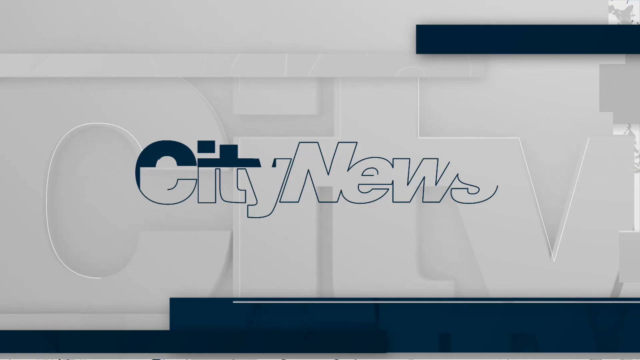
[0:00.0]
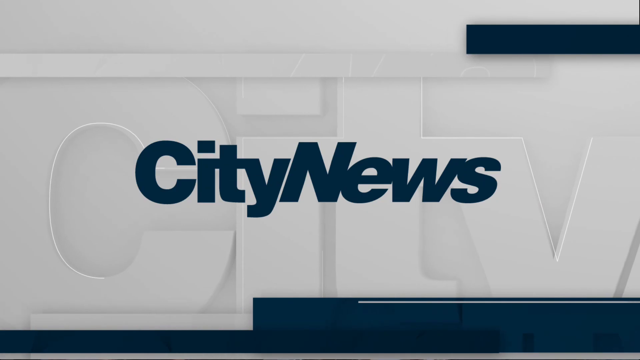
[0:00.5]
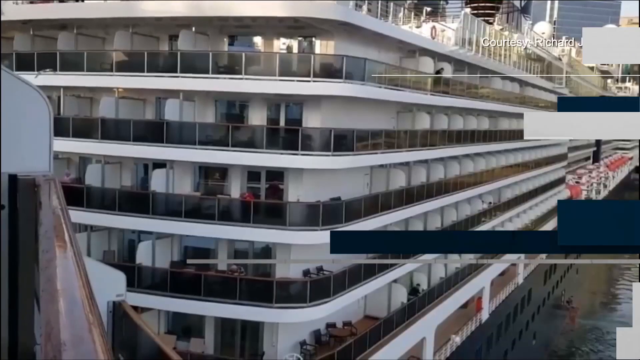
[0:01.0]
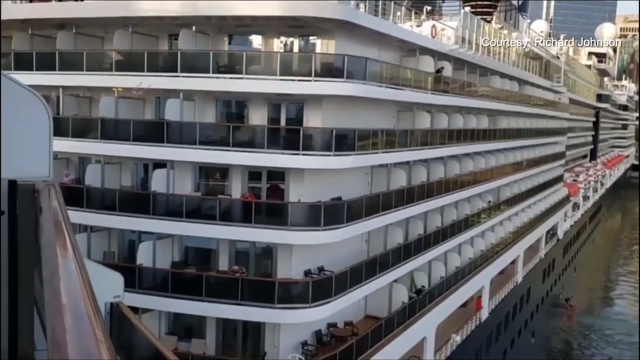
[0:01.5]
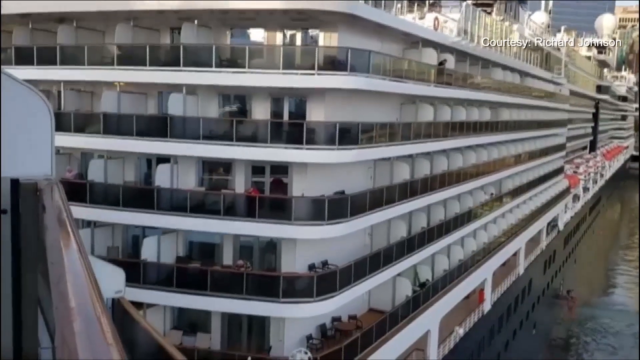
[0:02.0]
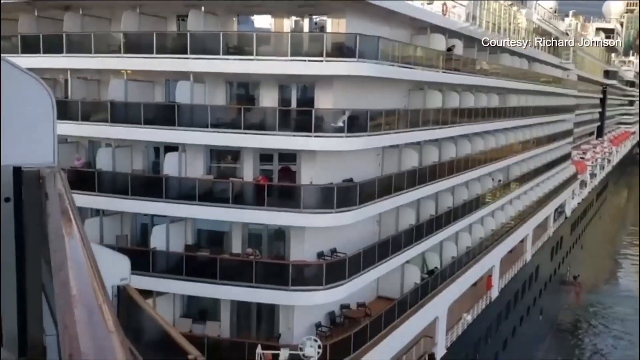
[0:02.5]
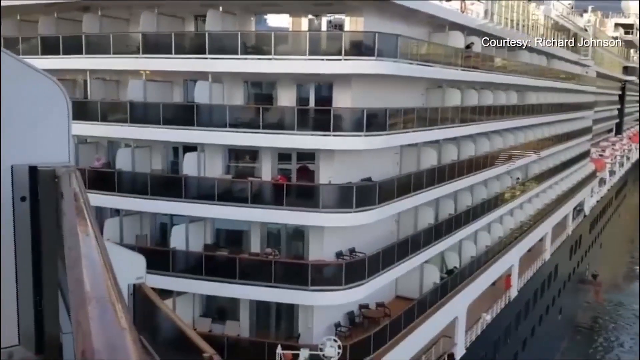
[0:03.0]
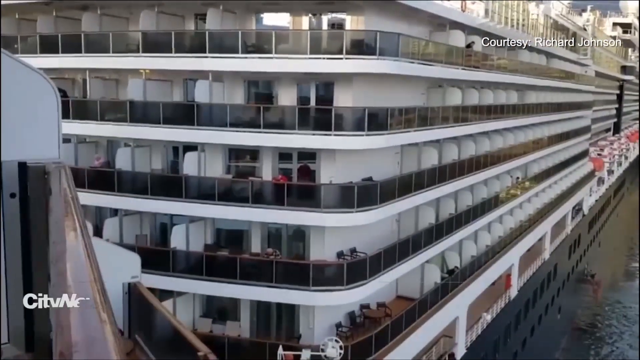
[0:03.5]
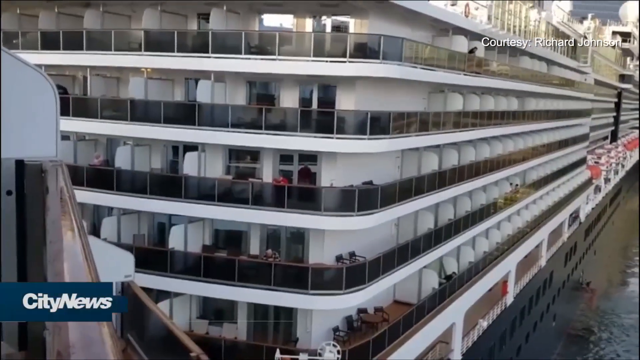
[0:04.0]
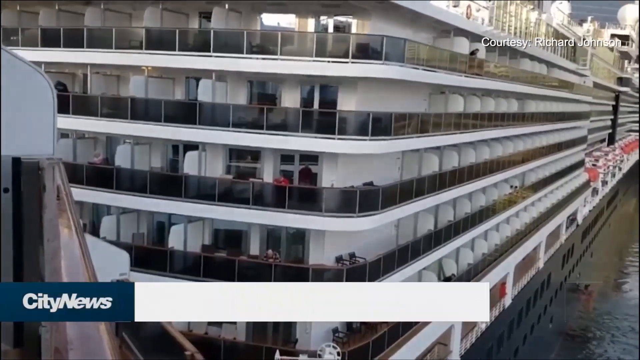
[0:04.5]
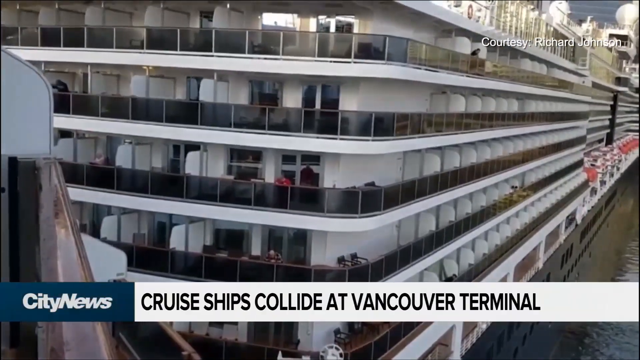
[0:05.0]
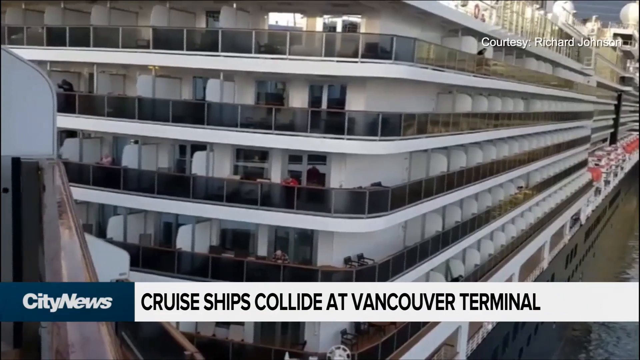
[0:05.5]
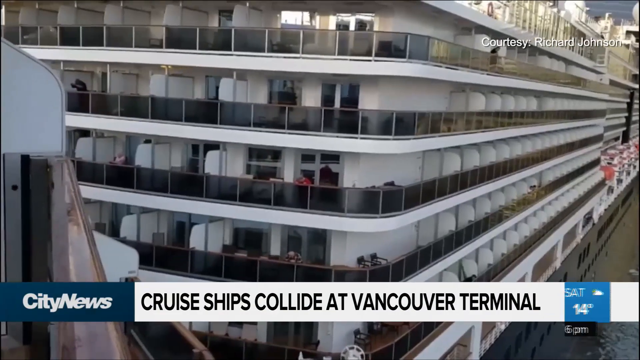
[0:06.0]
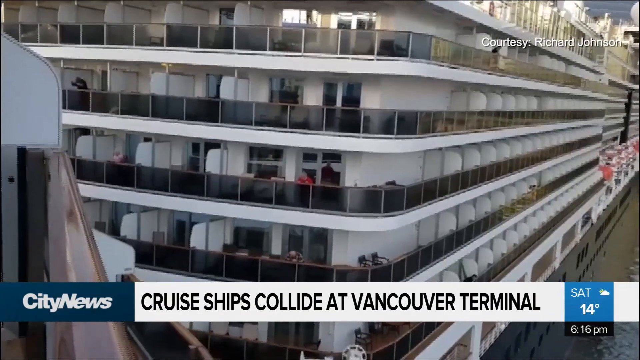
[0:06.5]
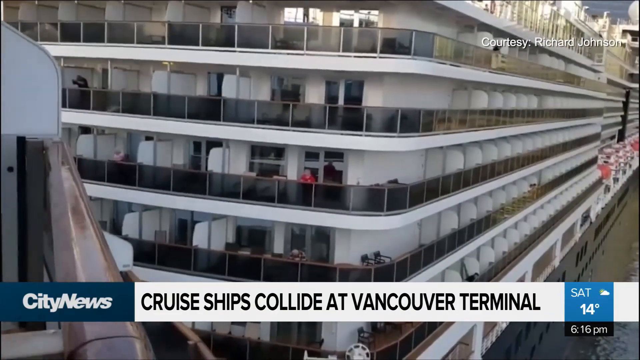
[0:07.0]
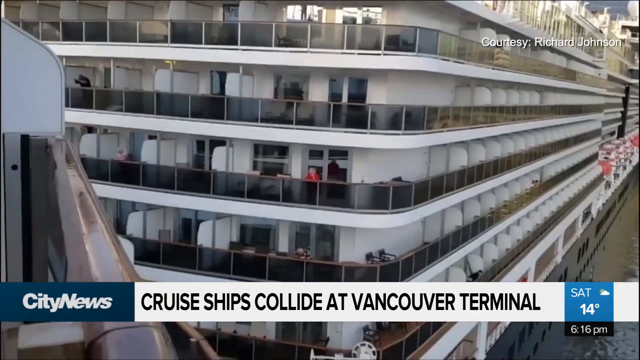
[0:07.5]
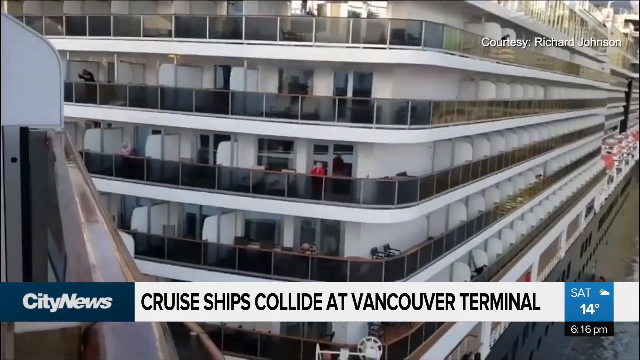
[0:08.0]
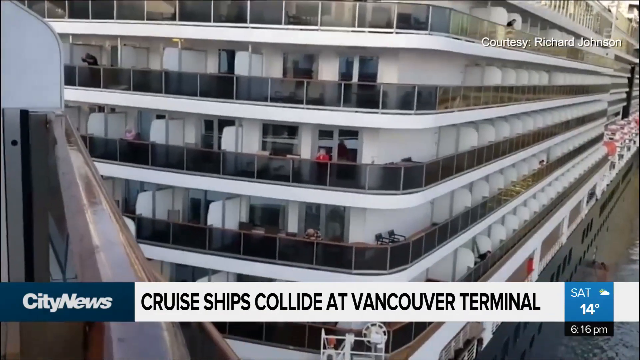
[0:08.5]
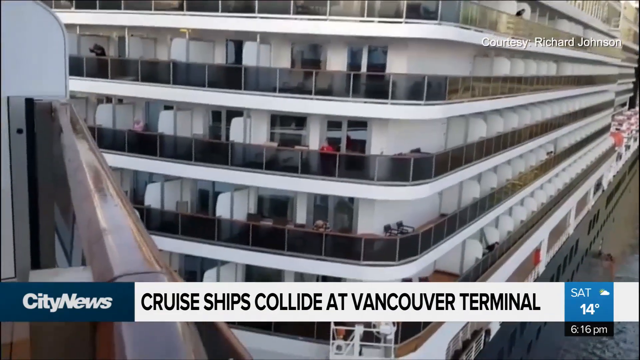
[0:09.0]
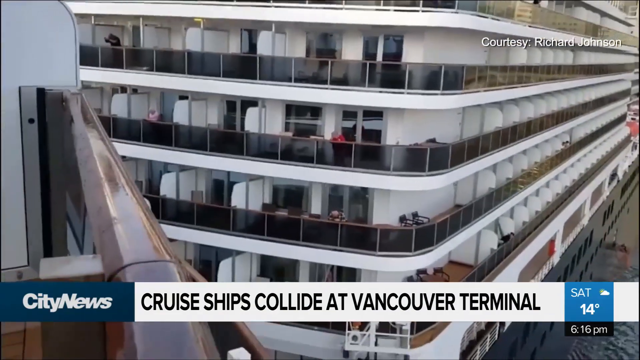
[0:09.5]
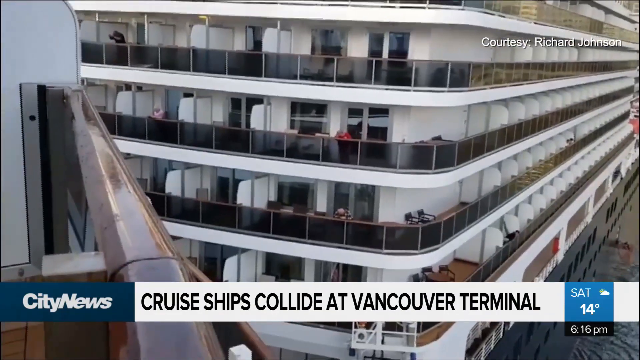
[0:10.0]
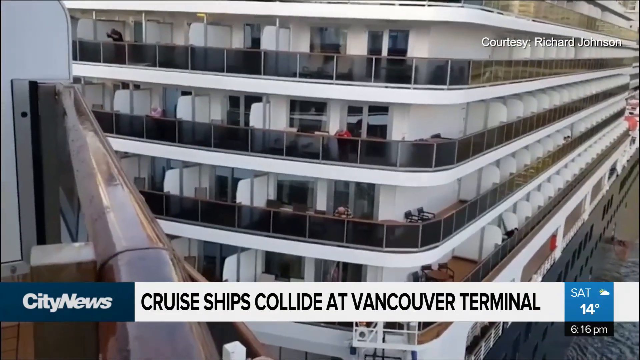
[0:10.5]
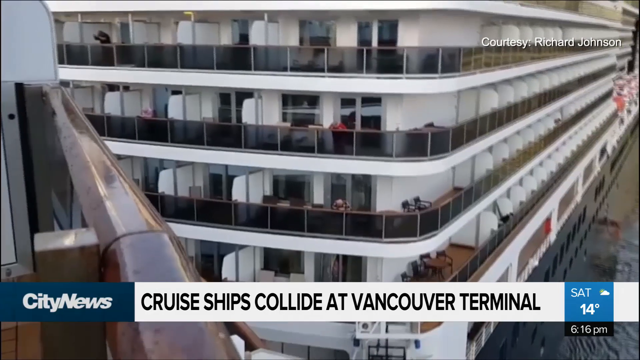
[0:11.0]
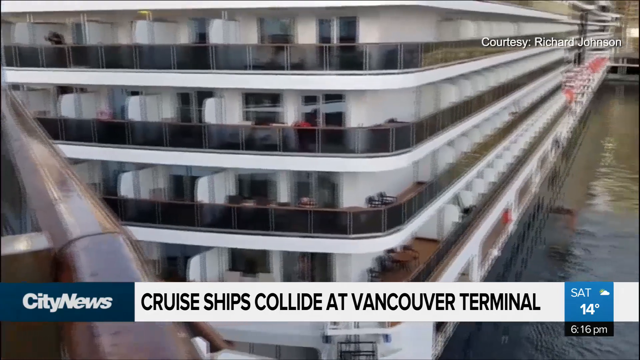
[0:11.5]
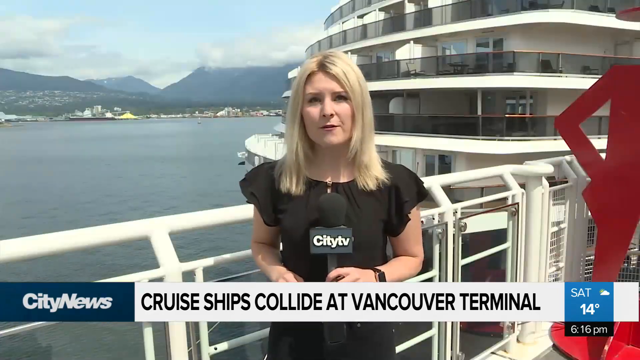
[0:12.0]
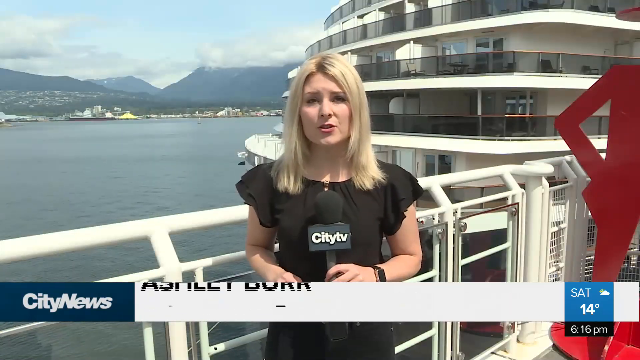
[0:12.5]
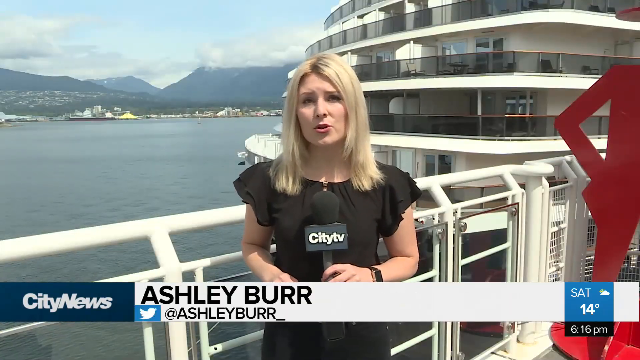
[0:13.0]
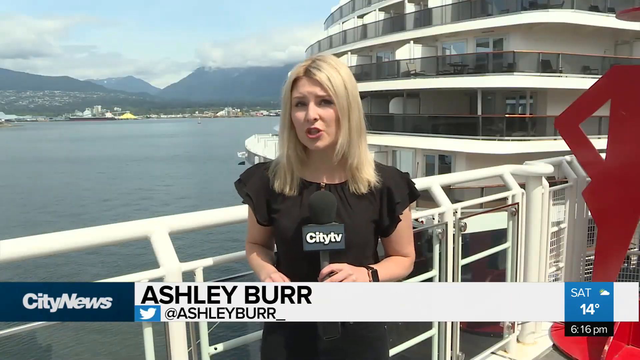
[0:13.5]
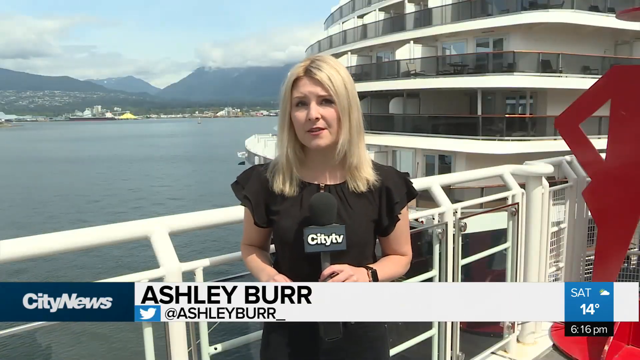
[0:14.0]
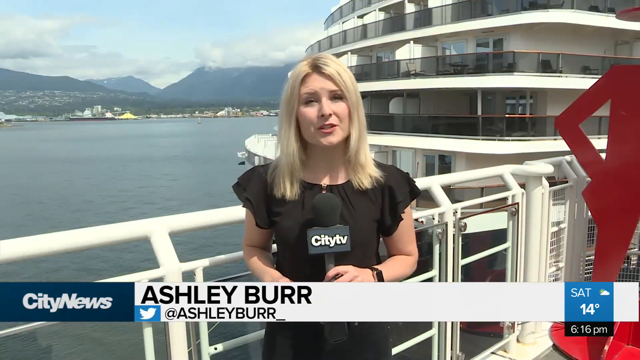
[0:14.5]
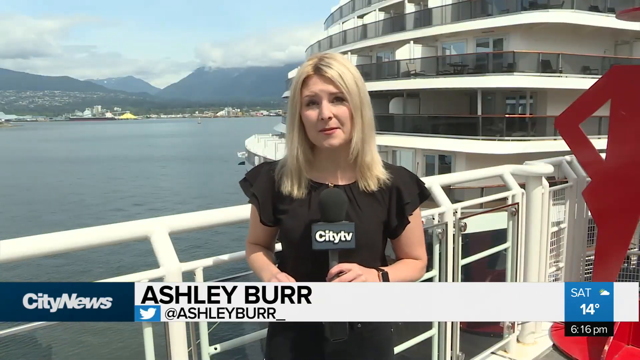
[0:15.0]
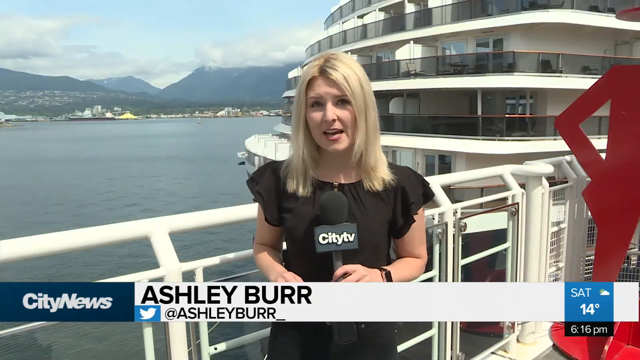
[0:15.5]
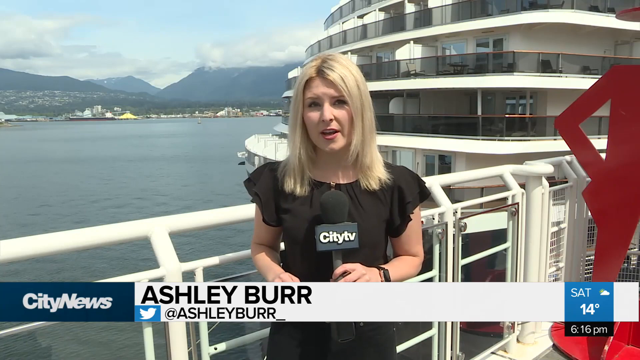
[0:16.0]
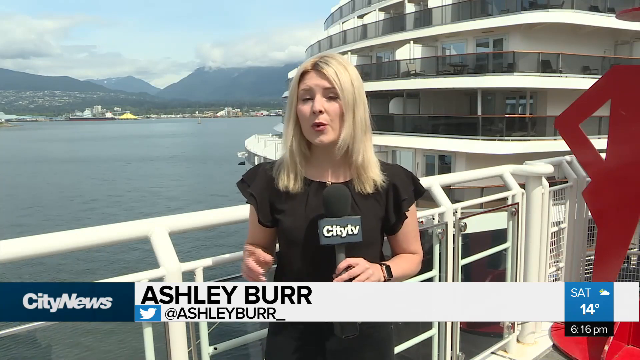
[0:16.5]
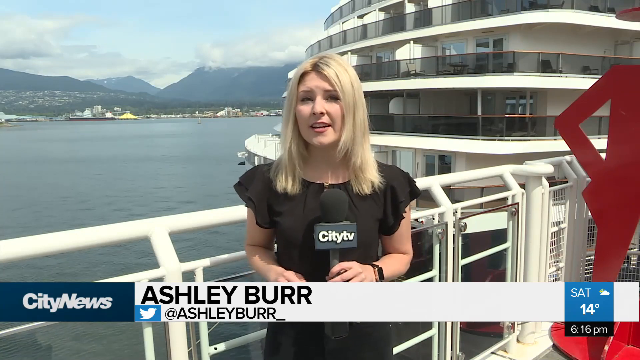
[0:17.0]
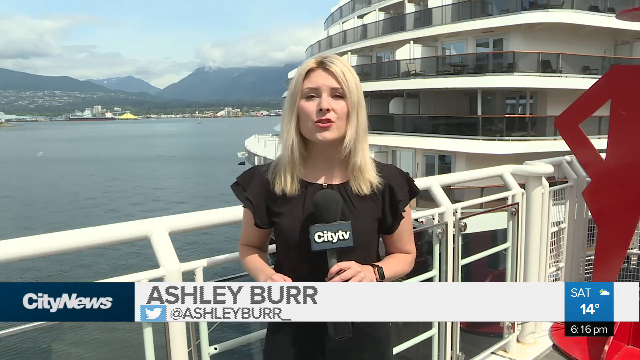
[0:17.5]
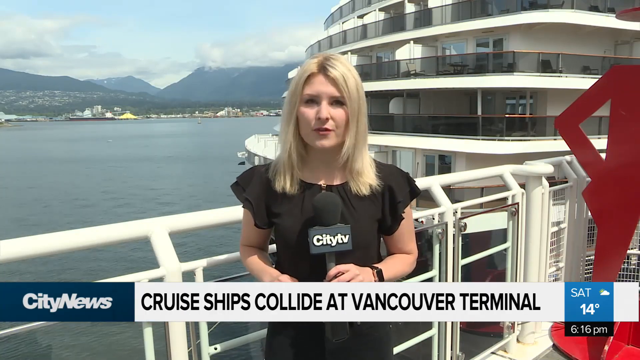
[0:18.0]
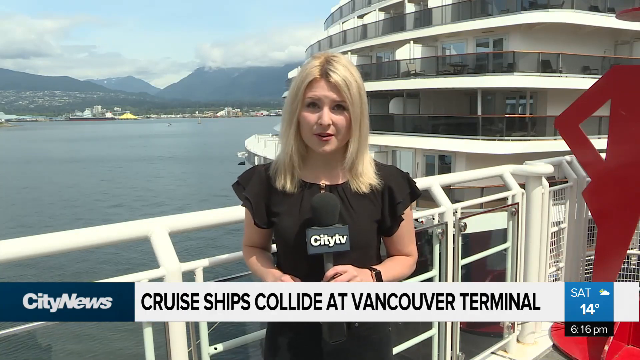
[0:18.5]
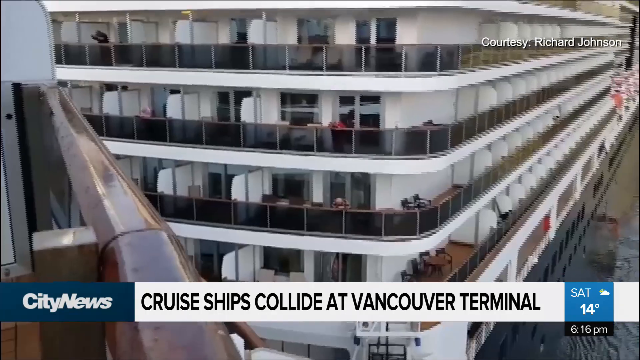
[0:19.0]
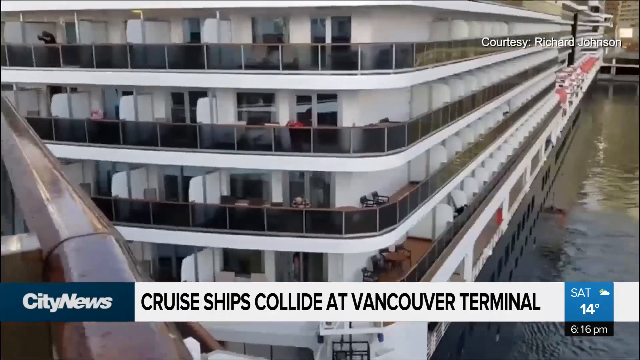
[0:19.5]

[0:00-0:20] The video is a City News news segment. It opens with the words "City News" across the screen, then cuts to an image of a large, white cruise ship at port. The ship is five levels high and surrounded by observational railings. A banner beneath the image reads "cruise ships collide at Vancouver Terminal", and the banner also shows "Saturday" and "14 degrees Celsius". The image holds for about five seconds, then cuts to a young reporter, Ashley Burr, whose name appears on a banner beneath her. She is in her early twenties, has blonde hair, wears a black dress, and holds a microphone while addressing the audience.